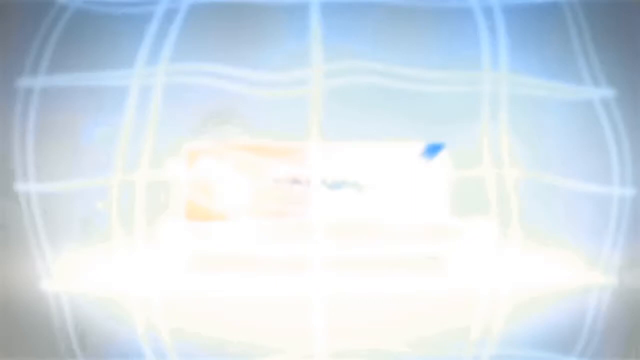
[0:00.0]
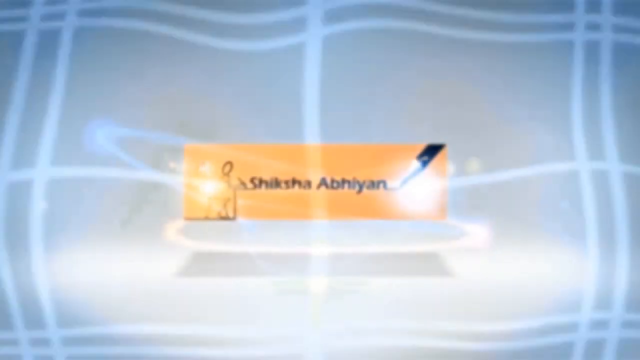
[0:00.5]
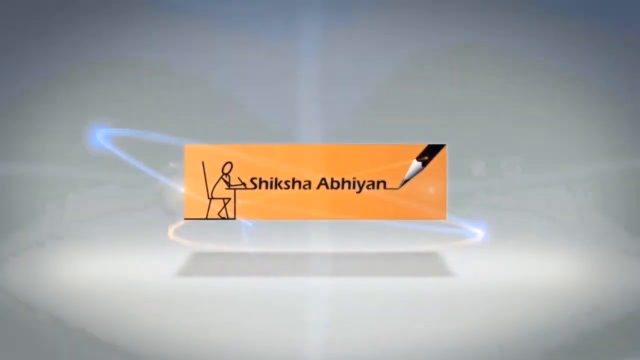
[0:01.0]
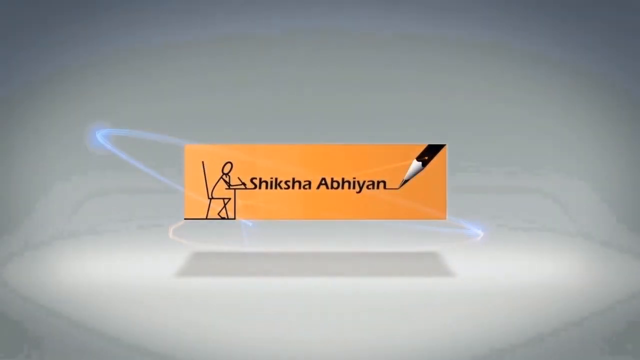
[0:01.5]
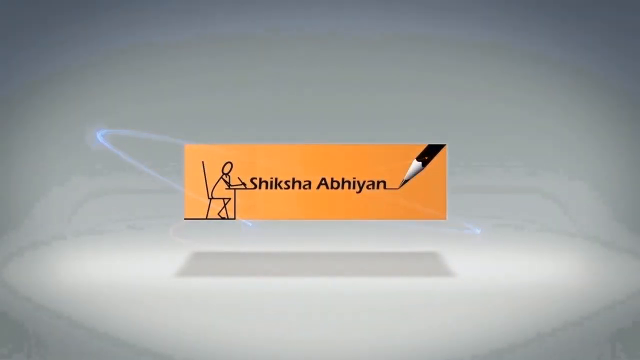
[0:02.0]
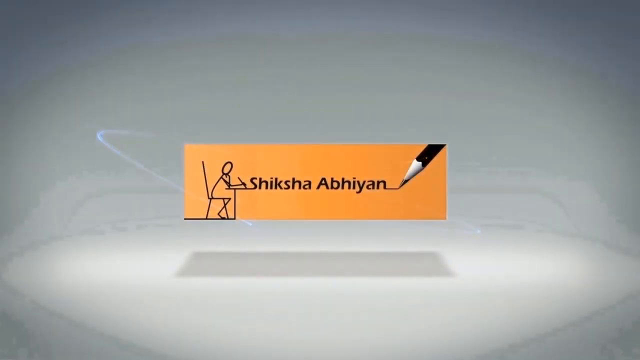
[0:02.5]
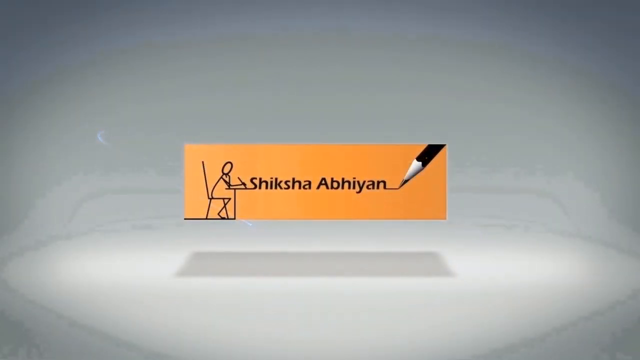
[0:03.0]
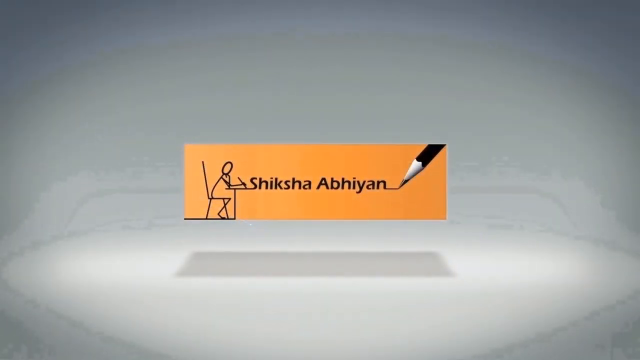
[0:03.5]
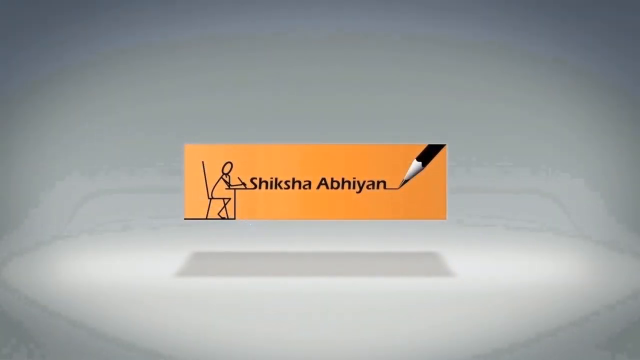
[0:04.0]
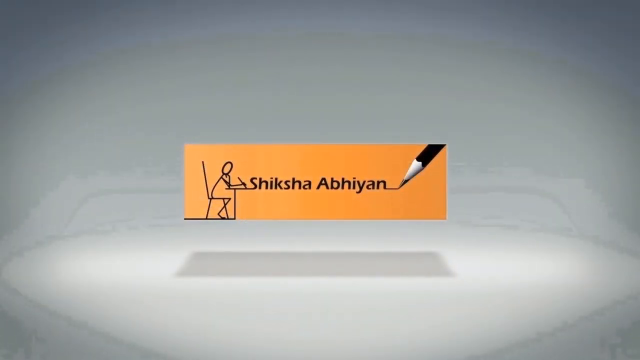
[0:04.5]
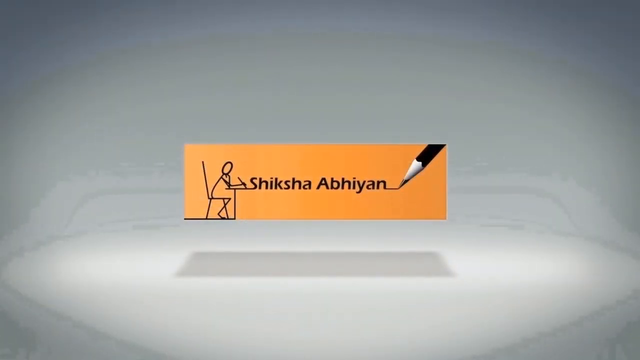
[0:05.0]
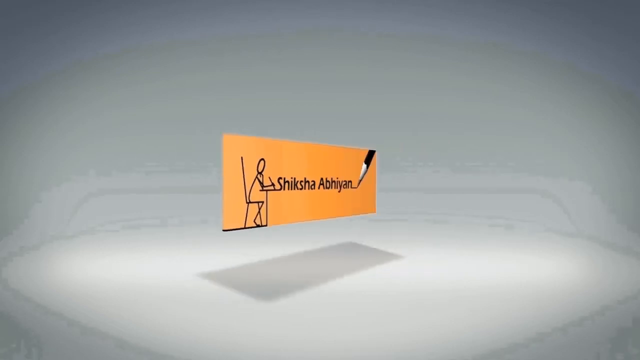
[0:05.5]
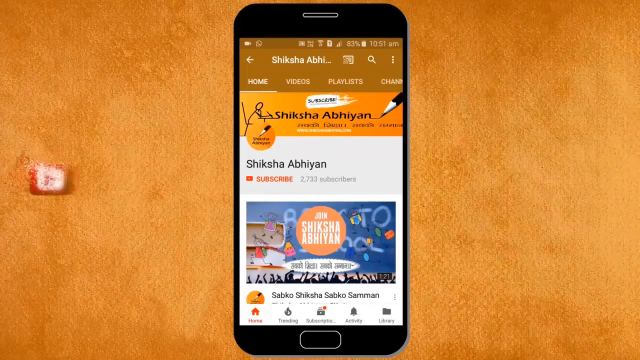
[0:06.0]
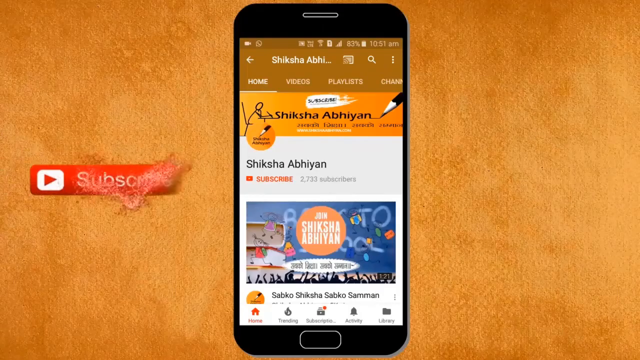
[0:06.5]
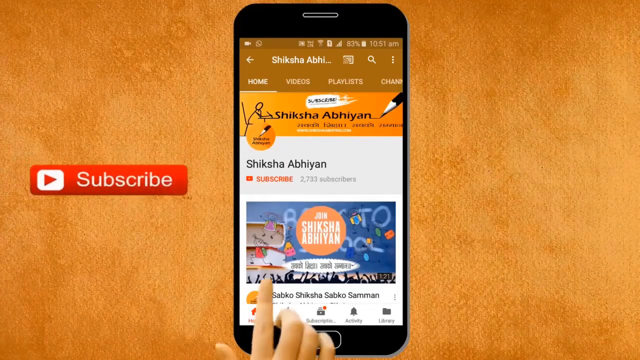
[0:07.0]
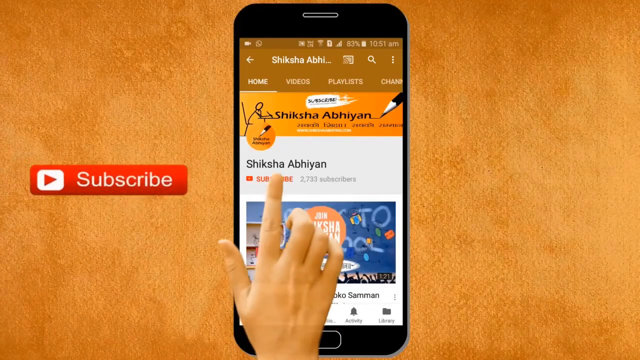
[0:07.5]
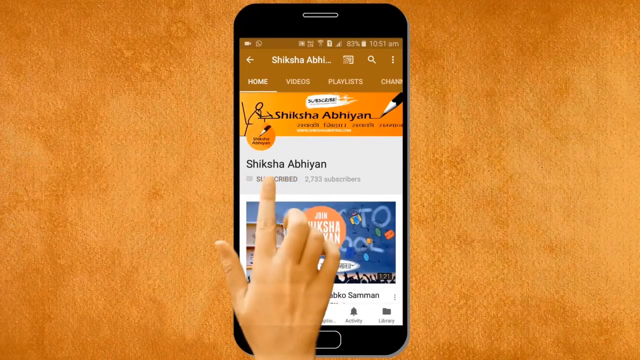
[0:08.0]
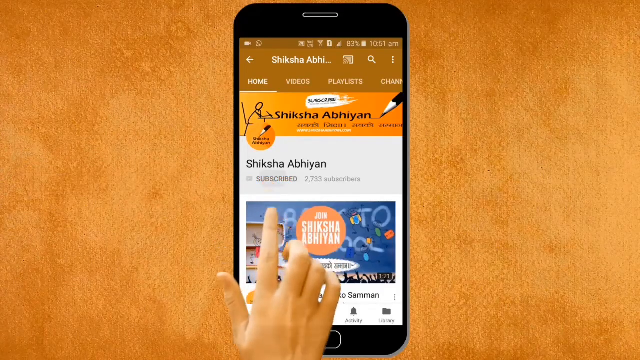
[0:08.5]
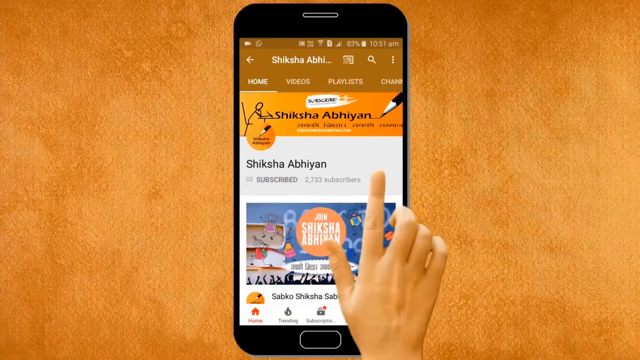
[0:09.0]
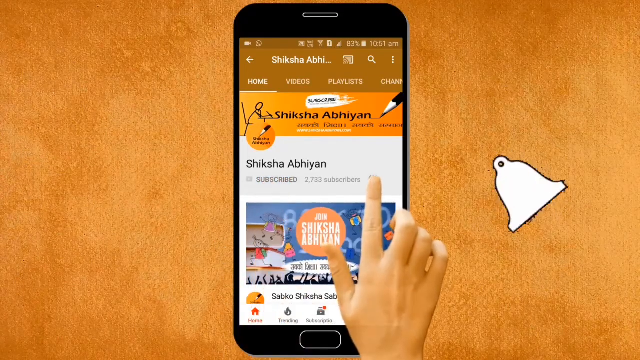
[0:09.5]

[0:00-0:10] The video appears to be setting up as an instructional video. In the center of the screen, a name appears on a panel; it looks like a Chinese name. The next screen switches to a depiction of a cell phone or smartphone screen, with a finger pushing buttons on it to subscribe to the YouTube channel whose name was shown in the center of the screen.